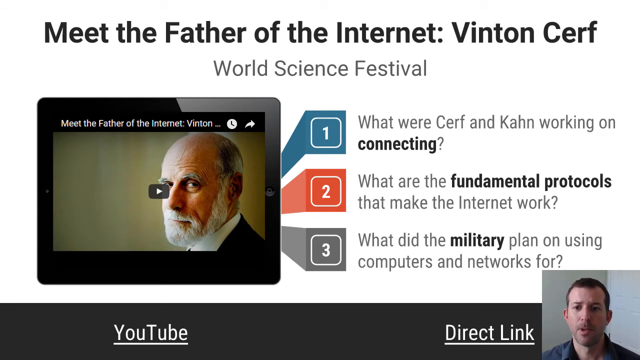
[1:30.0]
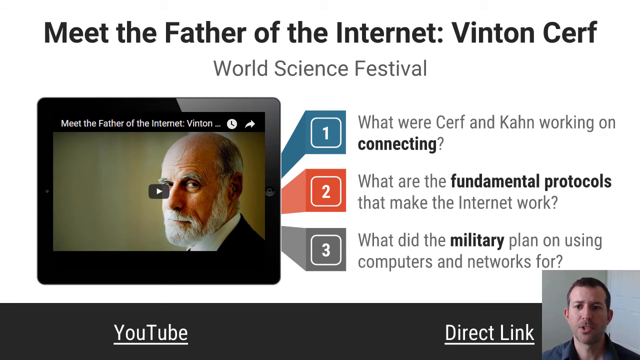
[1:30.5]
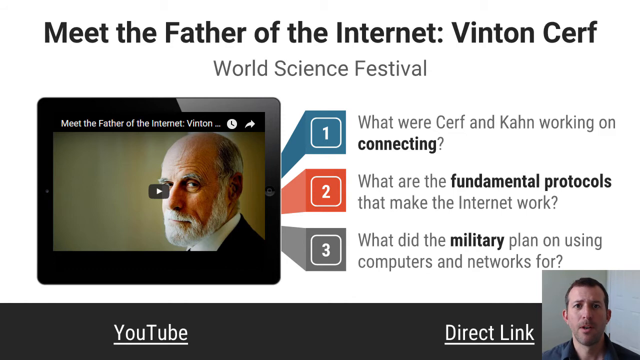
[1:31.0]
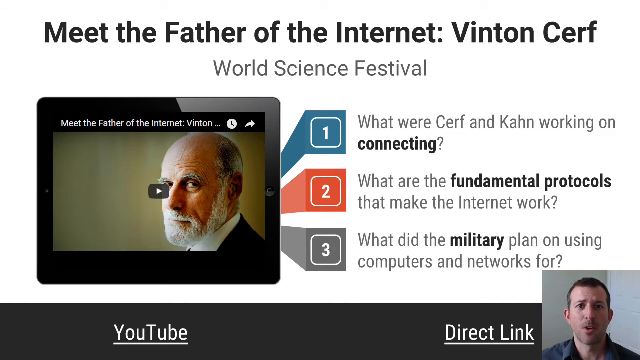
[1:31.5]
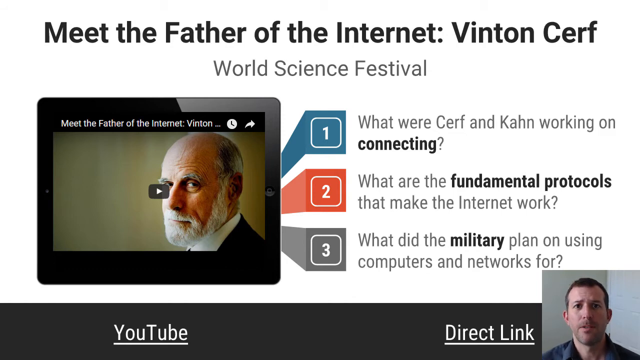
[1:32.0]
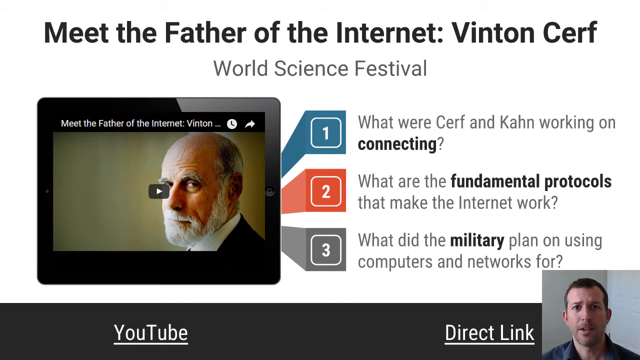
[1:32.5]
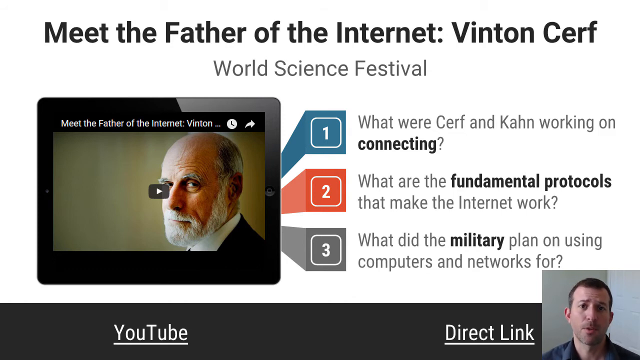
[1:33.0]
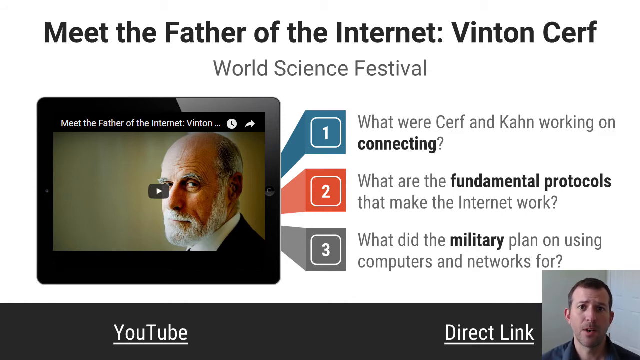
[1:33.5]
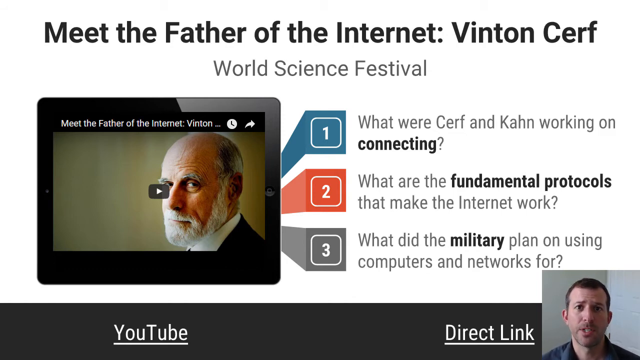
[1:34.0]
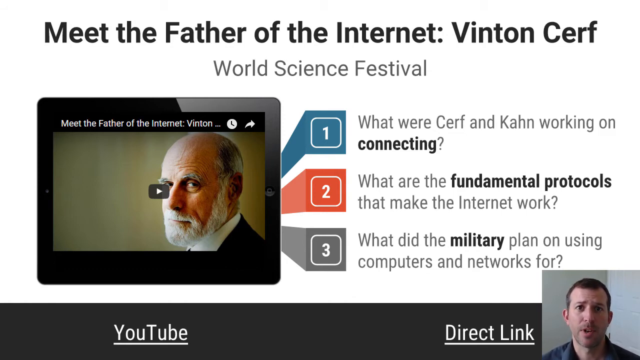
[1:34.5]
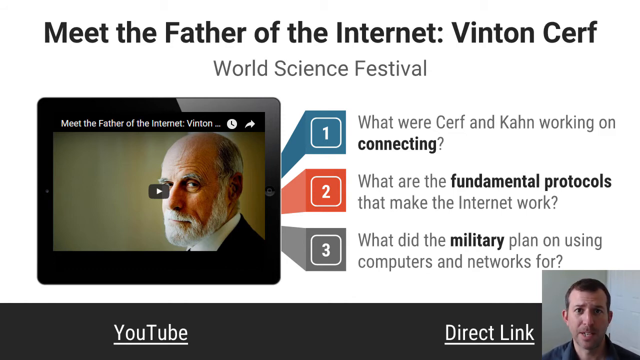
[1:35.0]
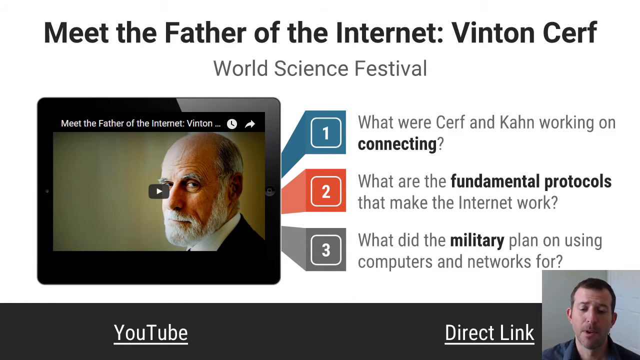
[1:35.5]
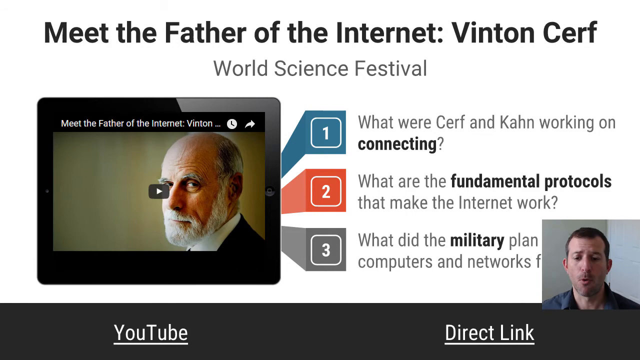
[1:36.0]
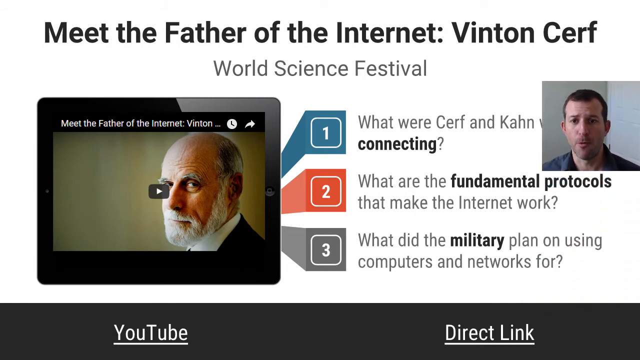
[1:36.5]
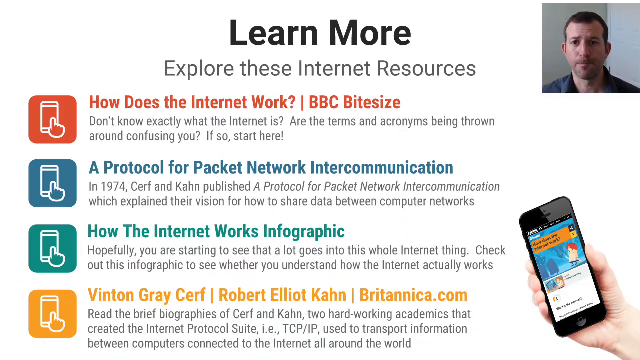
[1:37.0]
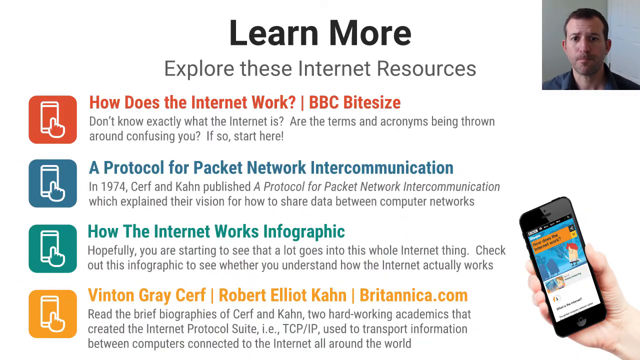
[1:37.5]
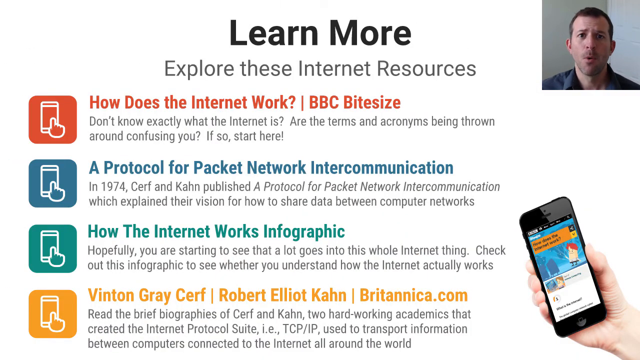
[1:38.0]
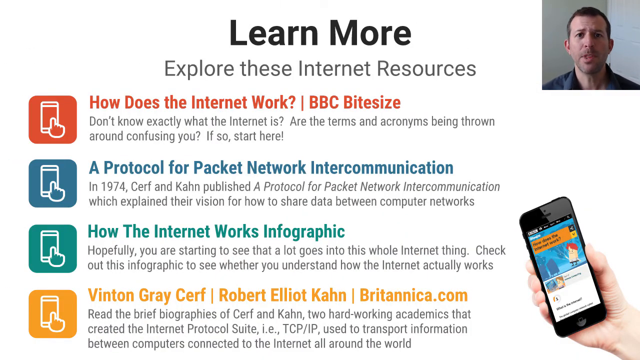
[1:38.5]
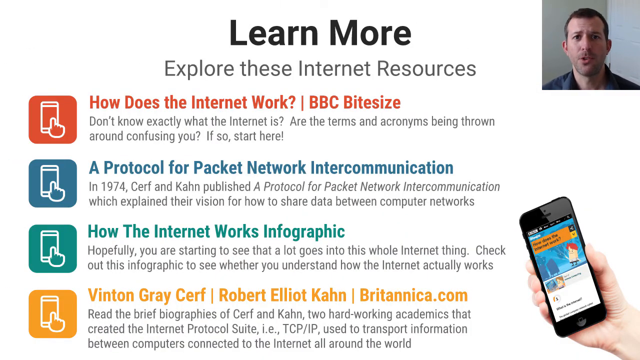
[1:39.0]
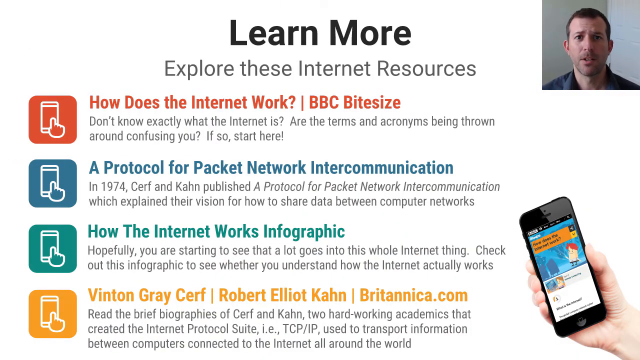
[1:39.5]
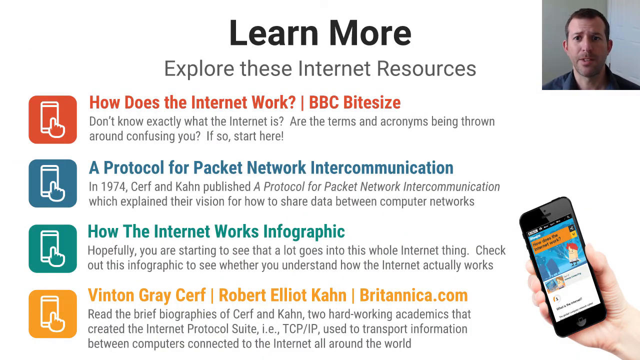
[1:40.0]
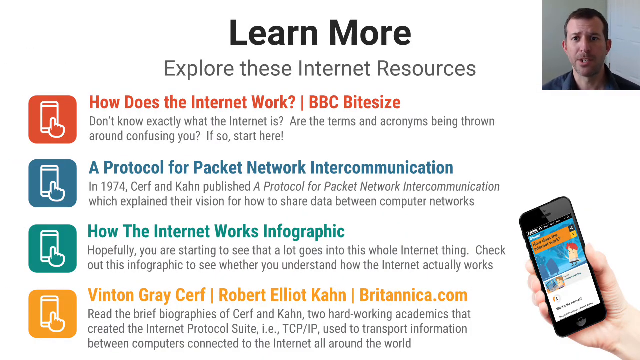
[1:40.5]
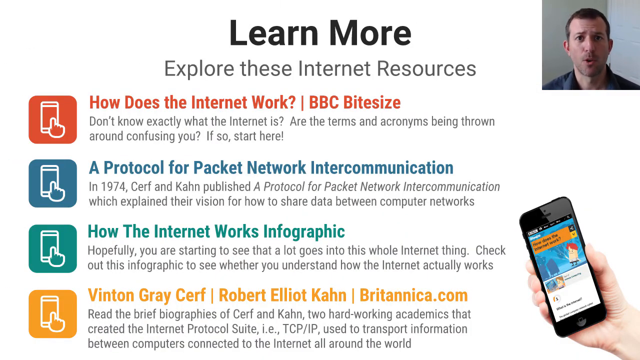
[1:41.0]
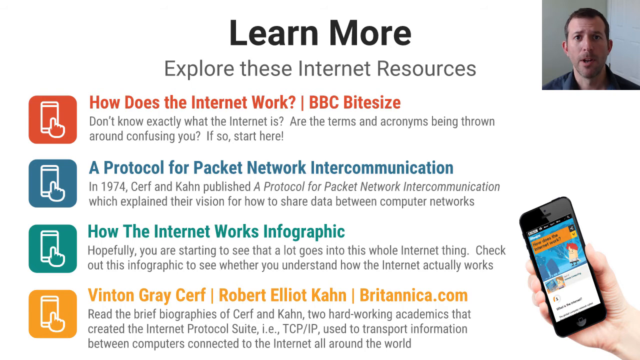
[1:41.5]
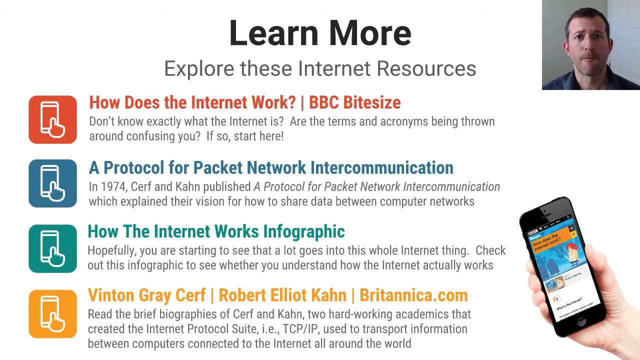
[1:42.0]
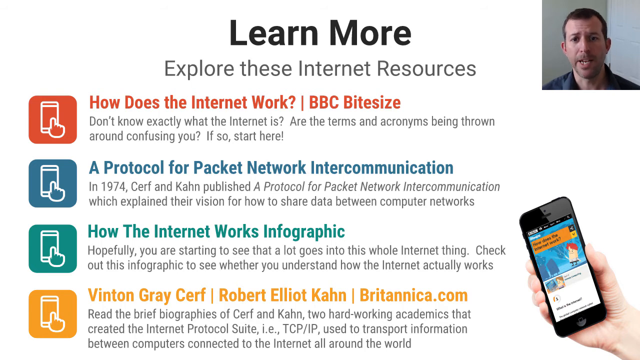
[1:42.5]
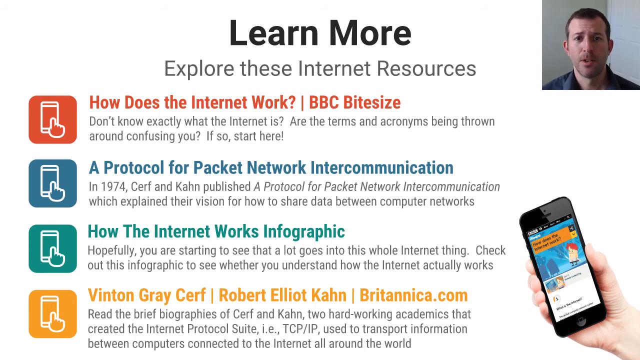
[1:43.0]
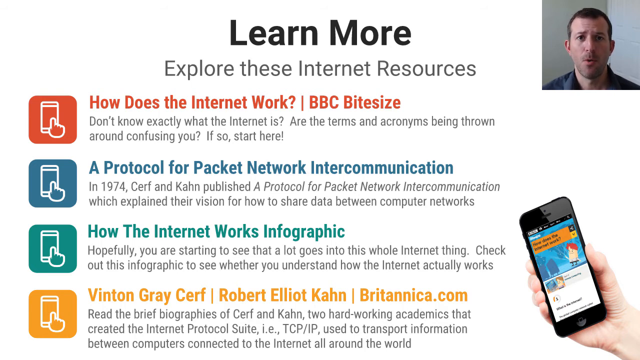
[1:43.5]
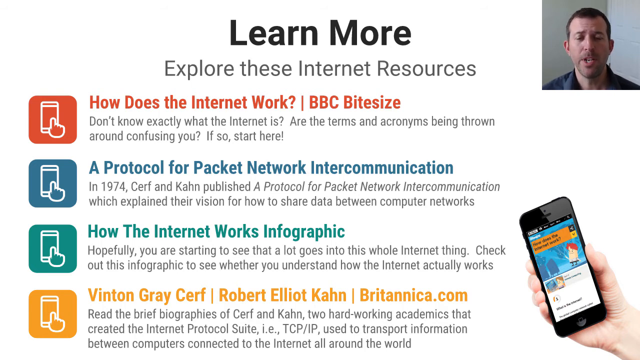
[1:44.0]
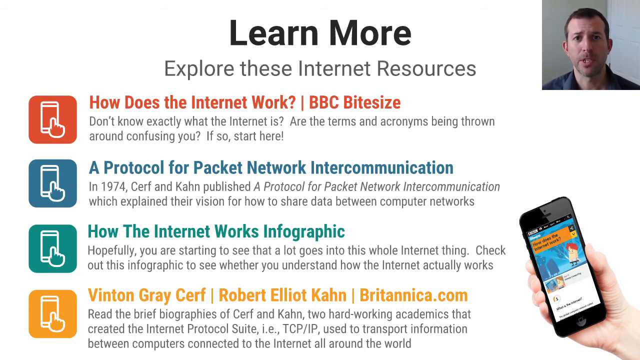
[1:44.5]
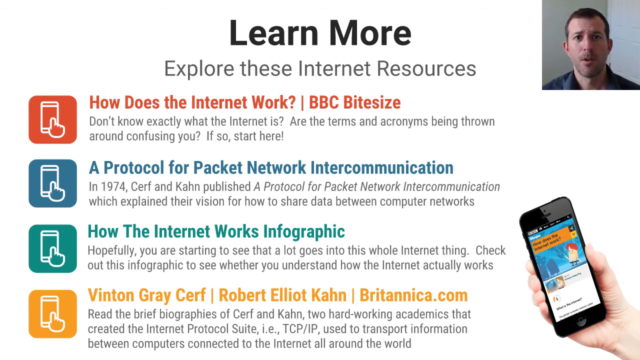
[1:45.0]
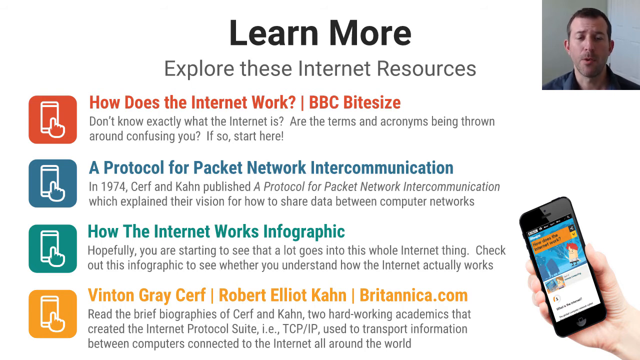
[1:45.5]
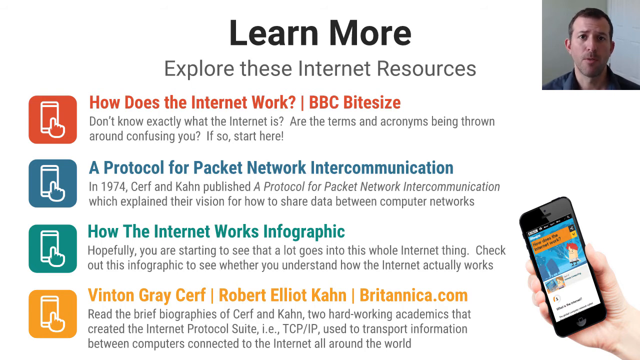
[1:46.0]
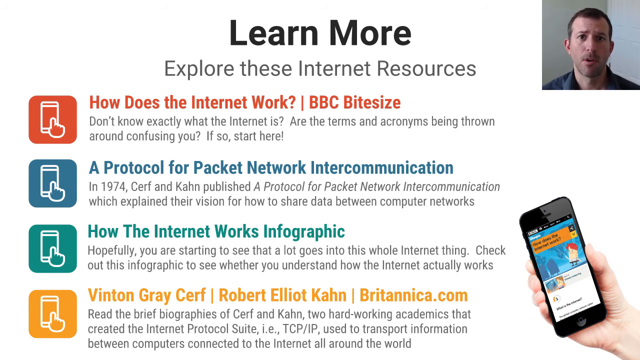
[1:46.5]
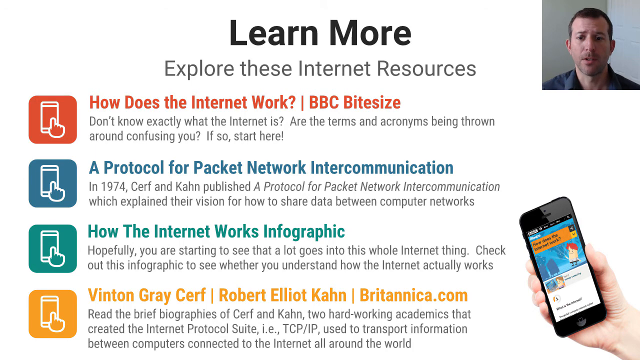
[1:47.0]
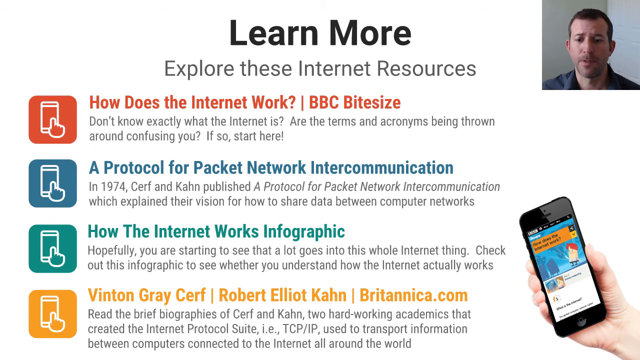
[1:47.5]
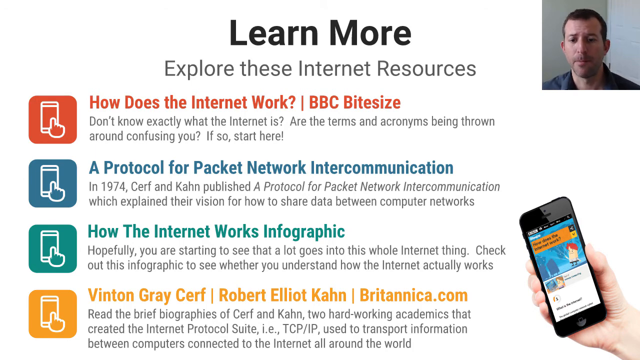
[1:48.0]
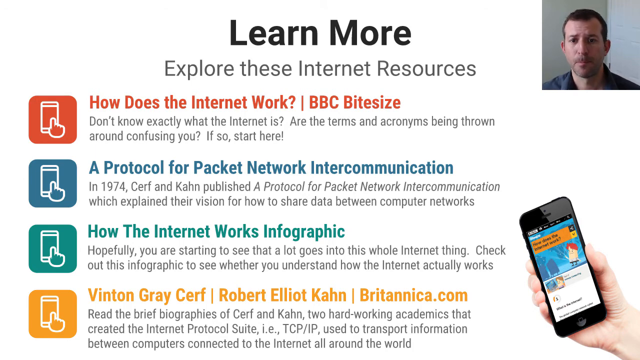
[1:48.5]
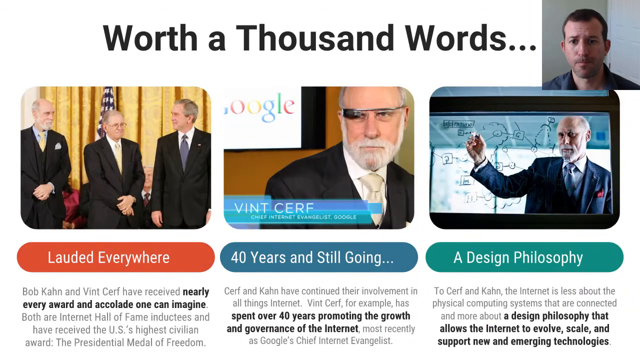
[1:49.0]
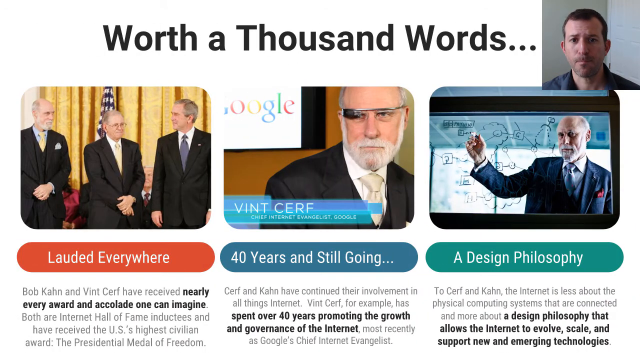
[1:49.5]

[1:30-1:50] The narrator, in the small square at the bottom right of the screen, moves slowly up the screen until he lands at the top right of the slide. The slide has a white background with lots of information on it. Black text reads "learn more" and grey text underneath reads "explore these internet resources". Four resources are listed beneath, each with a different coloured icon on the left: the first has a red icon with a red title and smaller grey text underneath, the next a blue icon with a blue title and grey text underneath, the next a green icon, and the last a yellow icon. From the bottom right of the slide a hand emerges holding a mobile phone at a 45-degree angle with a picture on it. In the video at the top right, the narrator moves his shoulder in a way that suggests he is clicking a mouse or trackpad to move to the next slide. He pauses his narration and starts again when another slide appears, moving quickly from the left side of the screen to the right. This slide has a white background at the top and black writing reading "Worth a thousand words...". Beneath it are three videos side by side, each with an oblong text box under it in a different colour: red, blue and green. Beneath each text box is very small grey writing with some parts in bold.